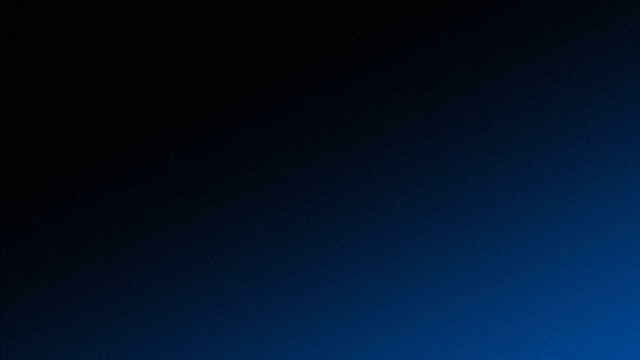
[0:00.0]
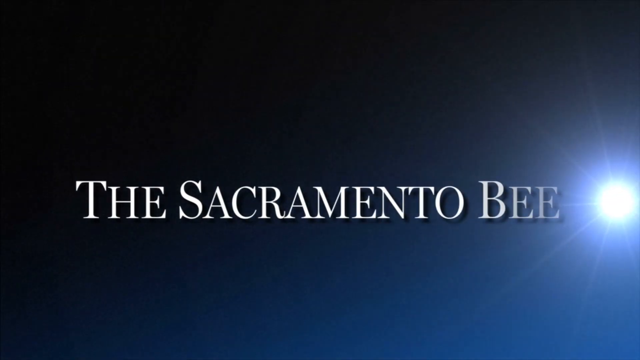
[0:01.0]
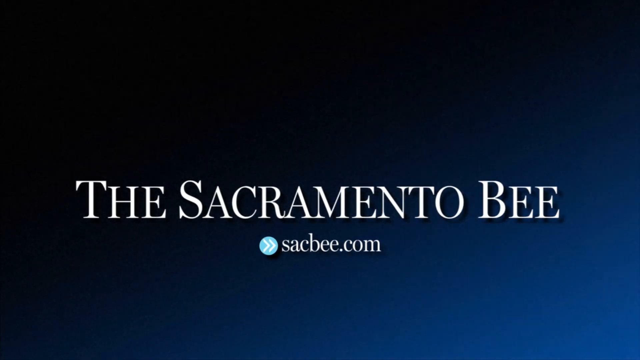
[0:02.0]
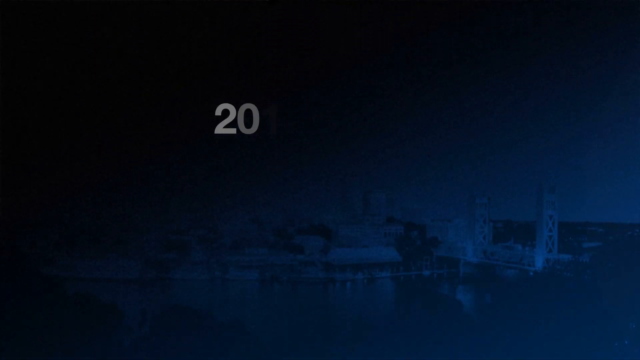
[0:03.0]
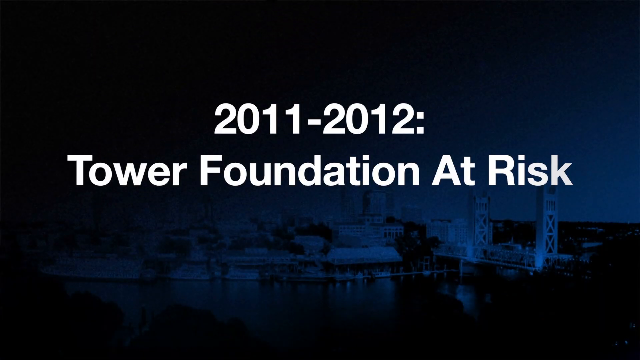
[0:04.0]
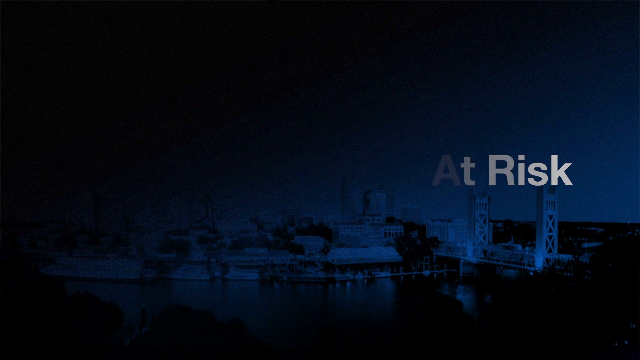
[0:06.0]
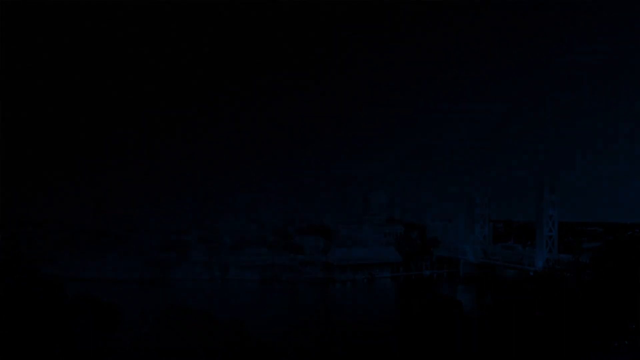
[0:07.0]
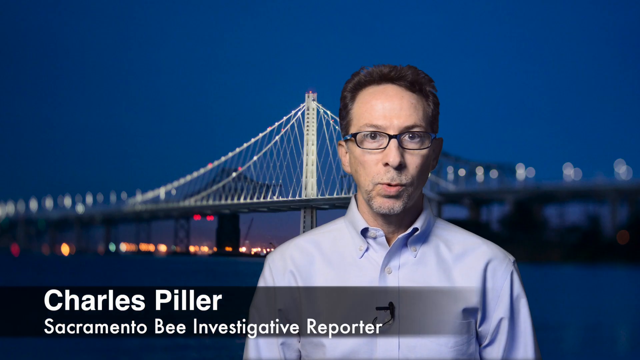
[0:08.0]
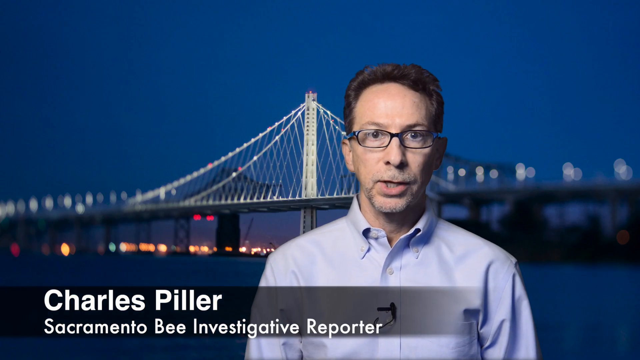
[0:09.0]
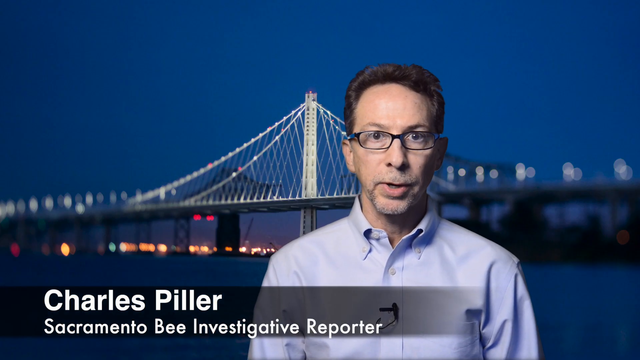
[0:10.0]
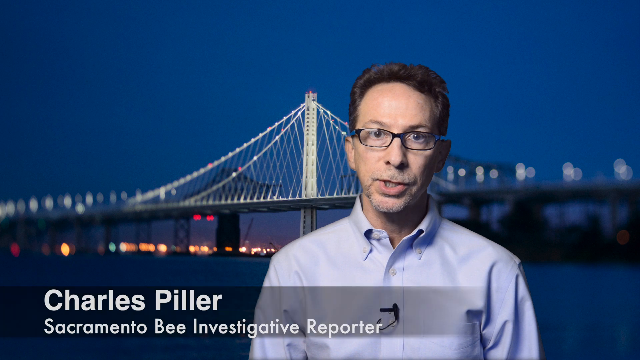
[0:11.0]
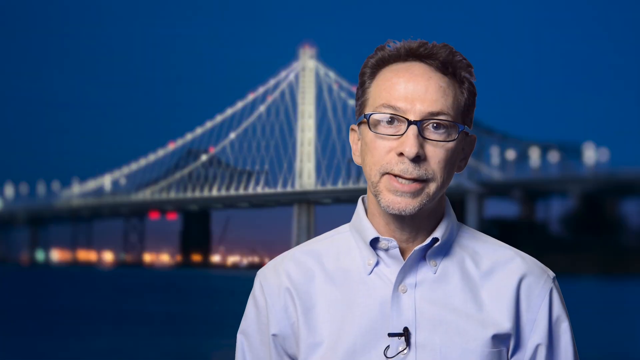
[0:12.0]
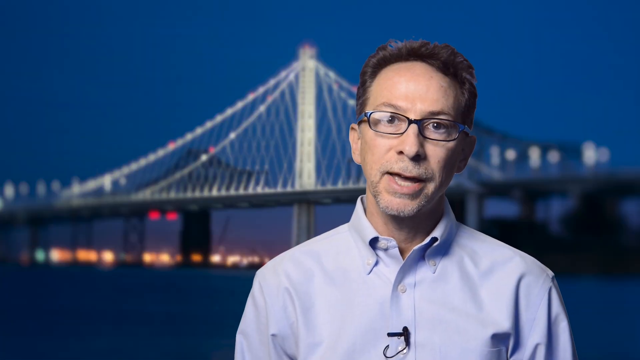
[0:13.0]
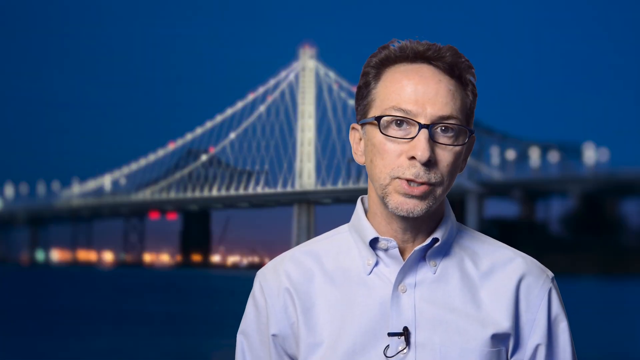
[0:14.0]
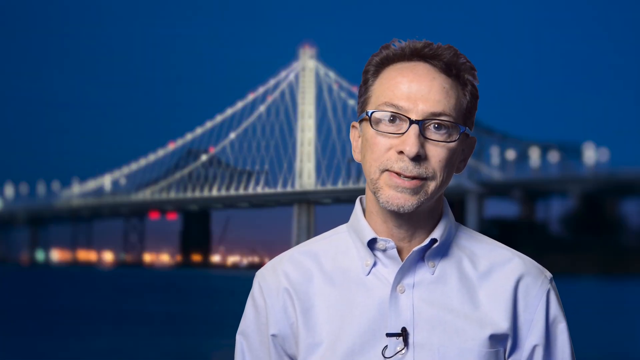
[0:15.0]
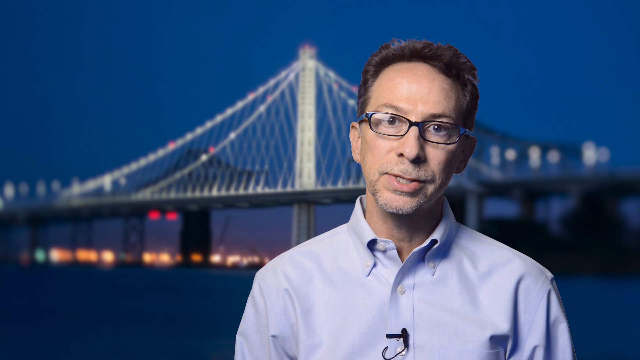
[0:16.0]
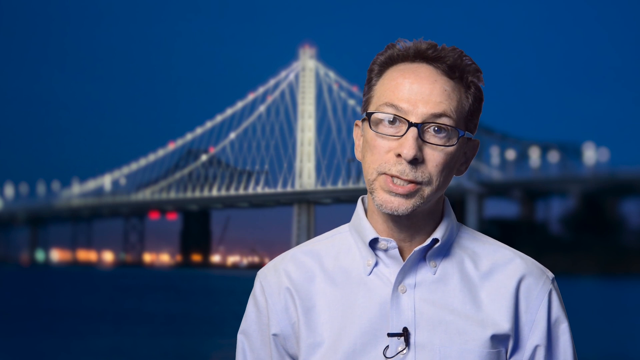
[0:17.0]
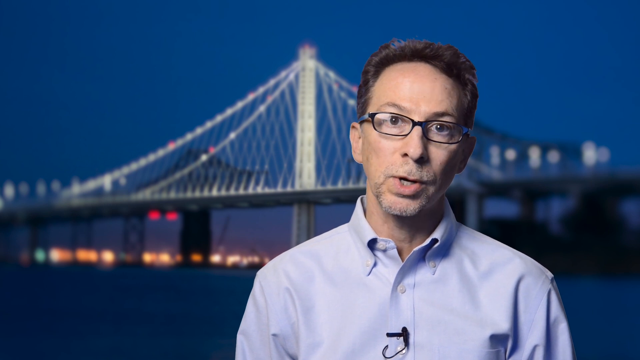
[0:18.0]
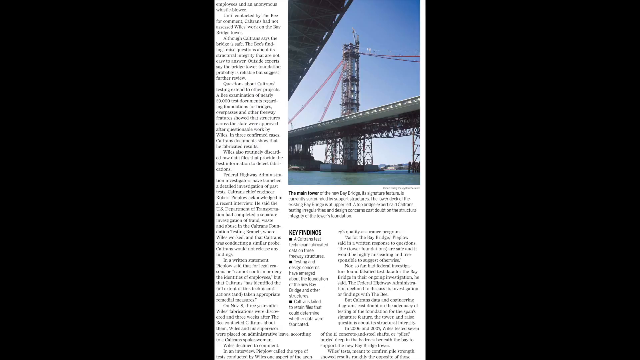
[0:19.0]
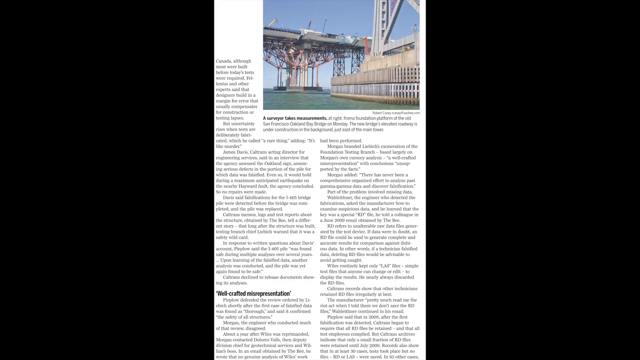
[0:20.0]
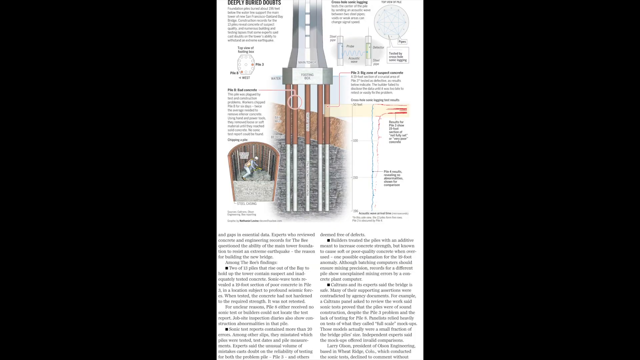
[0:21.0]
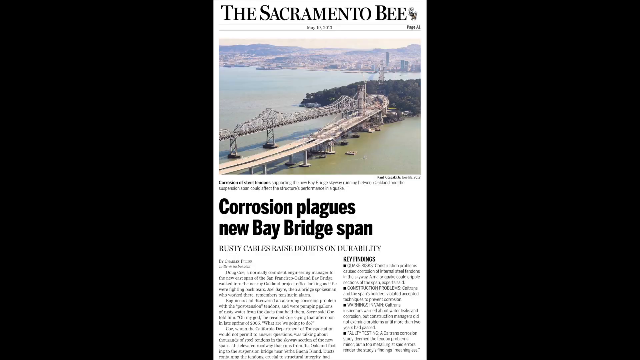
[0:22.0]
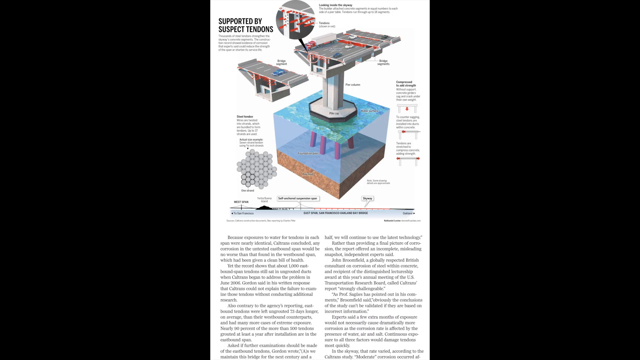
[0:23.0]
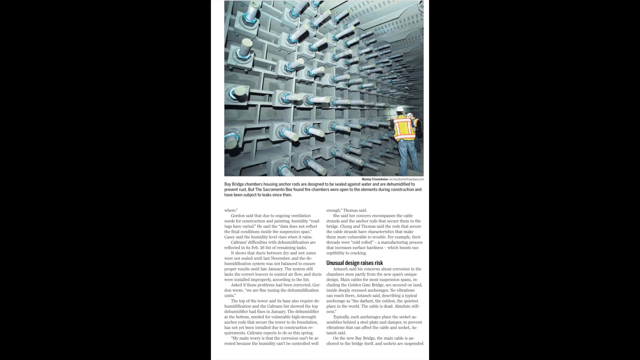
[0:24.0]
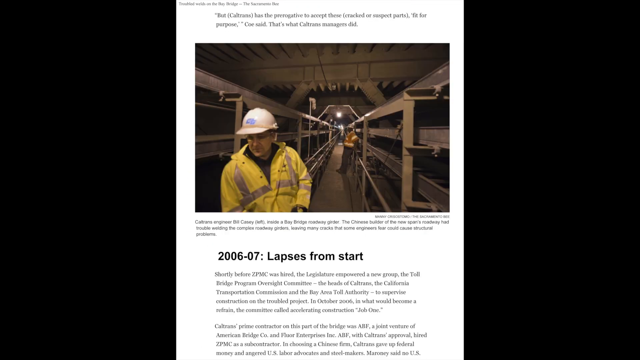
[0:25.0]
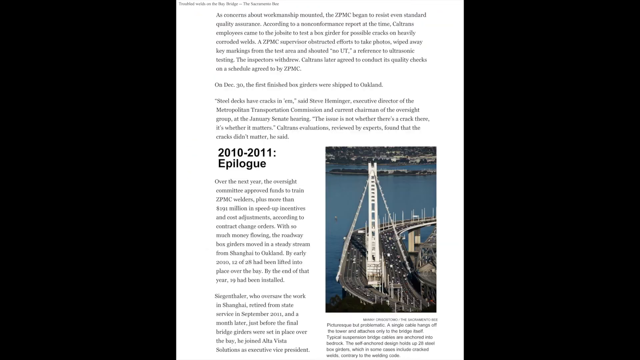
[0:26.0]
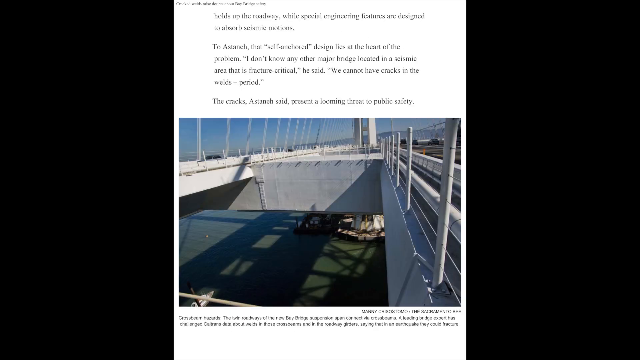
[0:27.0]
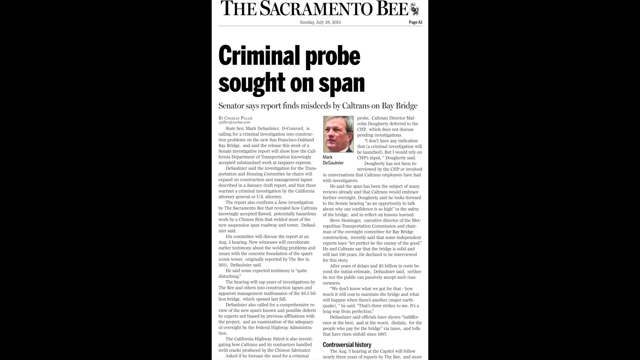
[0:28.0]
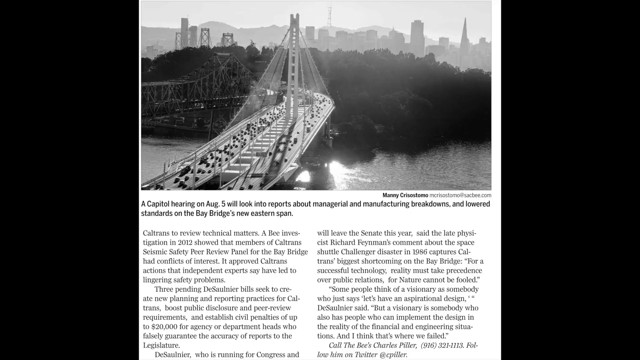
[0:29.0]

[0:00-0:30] An animation opens on a black and bluish background. A ball of light travels from the left to the right side of the screen, revealing the words "Sacramento Bee" in white. Underneath is the website for the Sacramento Bee, S-A-C-B.com, and to the left is an aqua blue circle with two white arrows pointing to the right. The text then grows, and text in the center of the screen, in white, reads "2011 to 2012, tower foundation at risk." That text disappears, and the scene changes to a man wearing a blue button-up shirt and glasses, who appears to be in his early 40s. He is sitting in front of a background of a white bridge, a picture that seems to have been taken at night or in the early morning. A translucent black bar appears at the bottom of the screen, with text on the left side: in the lower left is the name "Charles Piller," and underneath it the words "Sacramento Bee, investigative reporter." Seen from the chest up, the man looks at the camera and talks. After a few seconds the view zooms in closer on him, still from the chest up, as he keeps talking and looking directly at the camera. A series of what look to be newspaper pages follows. The first clipping is from the Sacramento Bee, with the title "Questions raised on Bay Bridge structural test" and a drawing of a bridge on the lower left side. Another clipping has a large picture of the bridge in the top right, surrounded by text. Another page has, at the top, a drawing of what looks to be the bottom of the bridge's circular foundation, with paragraphs of text below. The next page has a man in a green shirt folding his hands in its top right, surrounded by text. Another page is entirely text. Another has a picture of the bridge from near the ocean beneath it, showing a large concrete base, with the bottom of the bridge on the lower right side of the image to the left. More newspaper clippings follow, with more pictures of bridges and of construction workers working on the bridge, and the pages keep cycling.